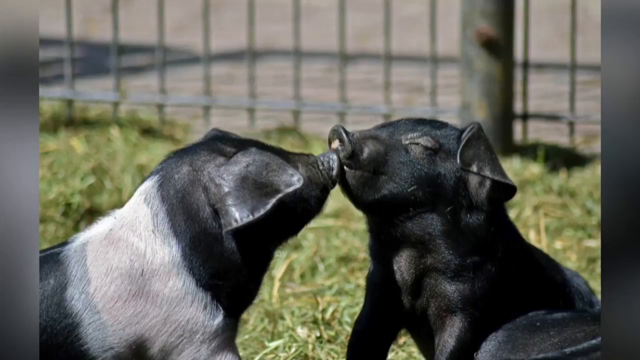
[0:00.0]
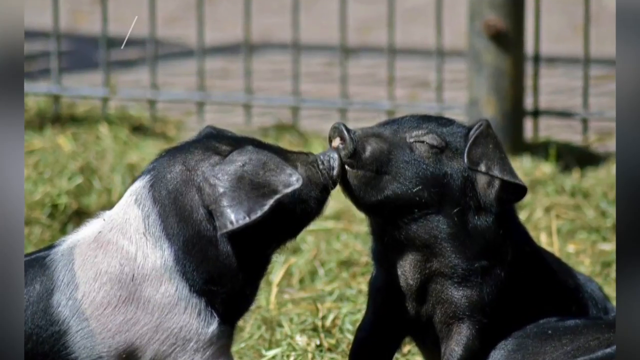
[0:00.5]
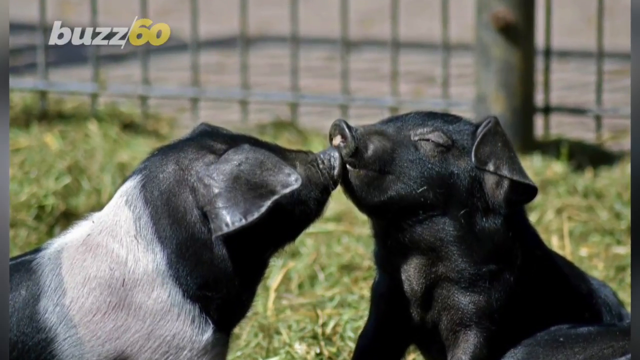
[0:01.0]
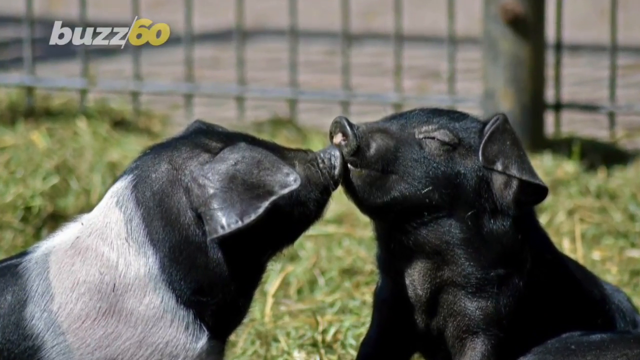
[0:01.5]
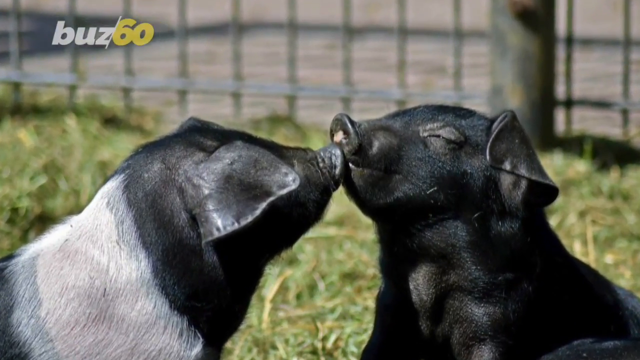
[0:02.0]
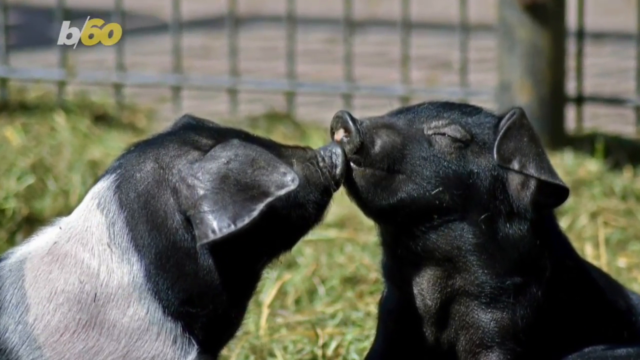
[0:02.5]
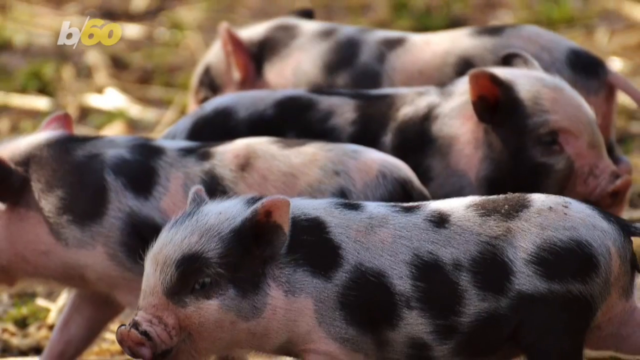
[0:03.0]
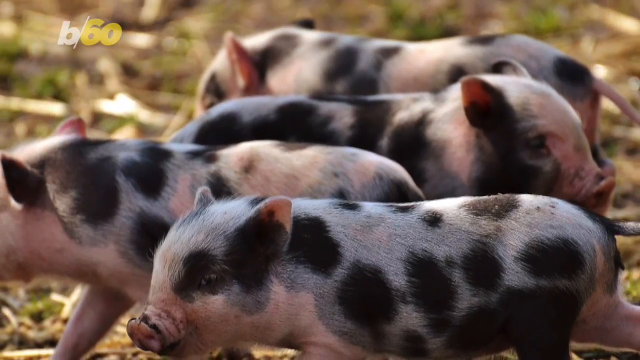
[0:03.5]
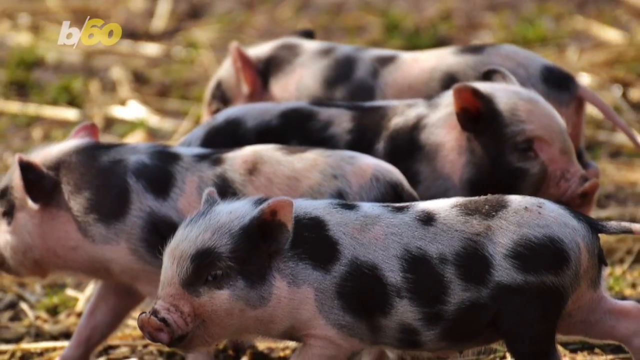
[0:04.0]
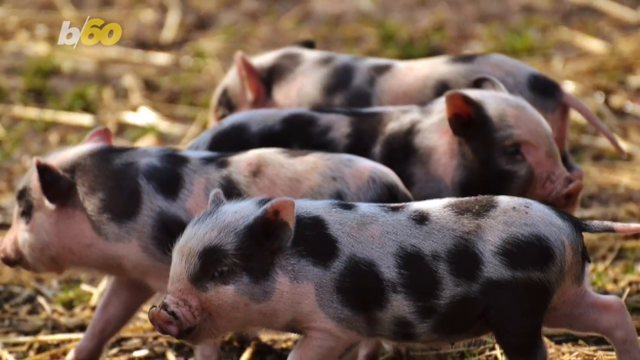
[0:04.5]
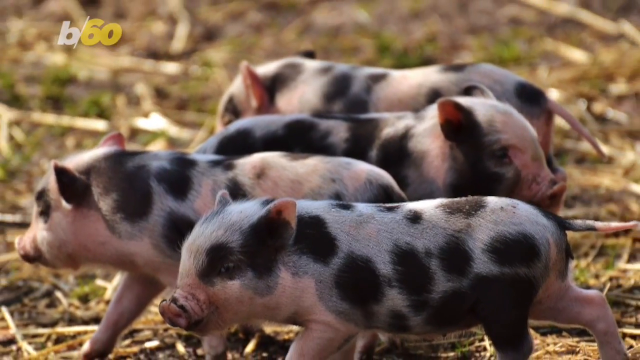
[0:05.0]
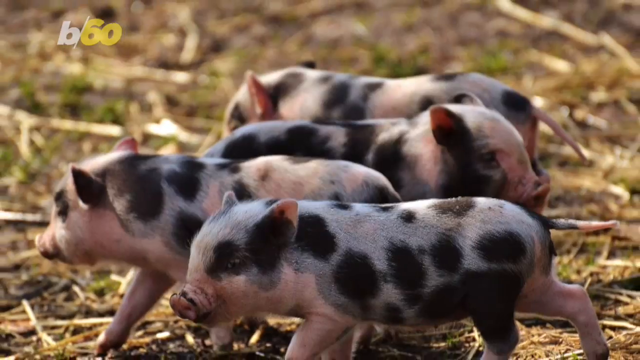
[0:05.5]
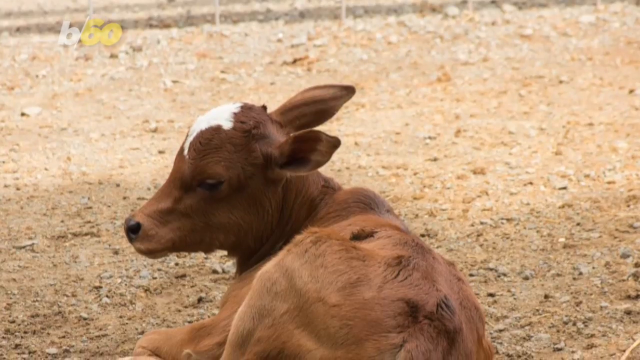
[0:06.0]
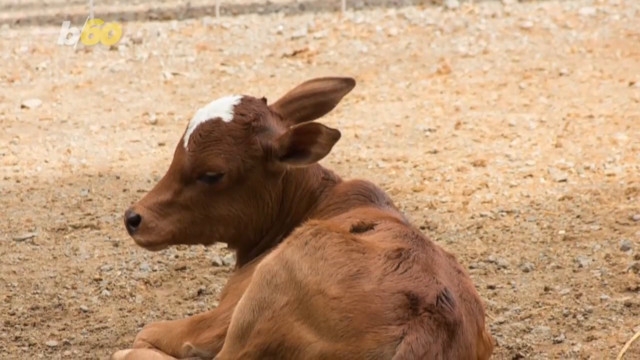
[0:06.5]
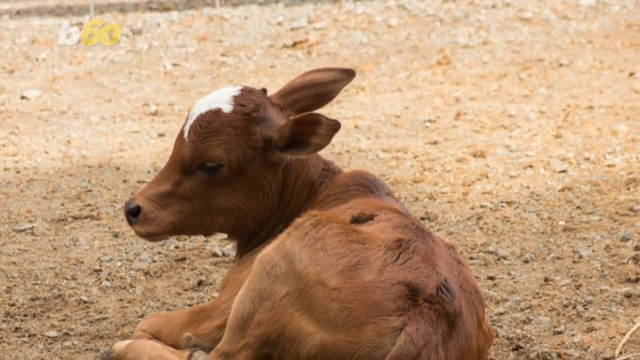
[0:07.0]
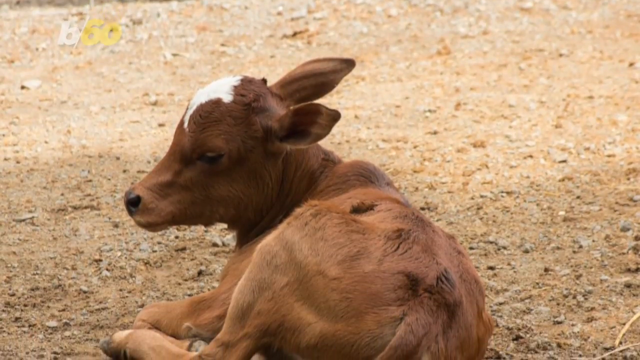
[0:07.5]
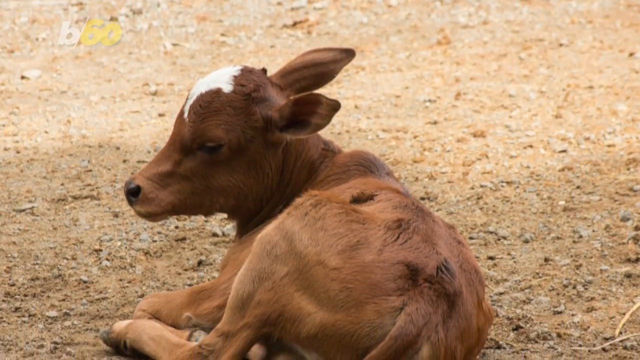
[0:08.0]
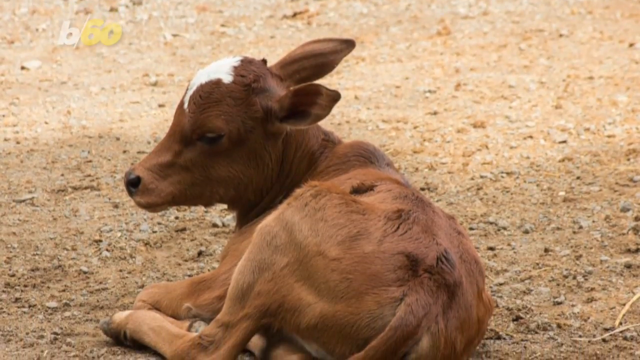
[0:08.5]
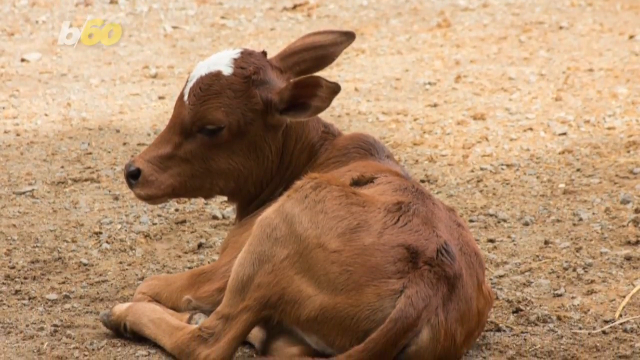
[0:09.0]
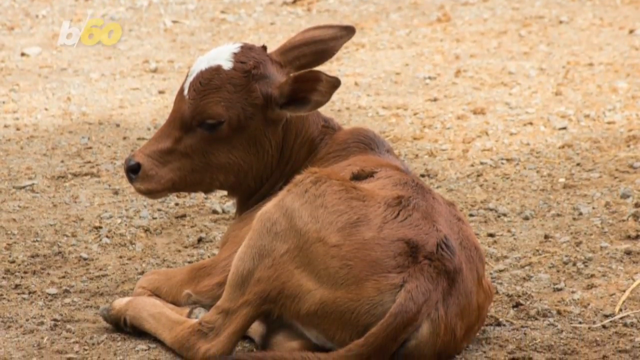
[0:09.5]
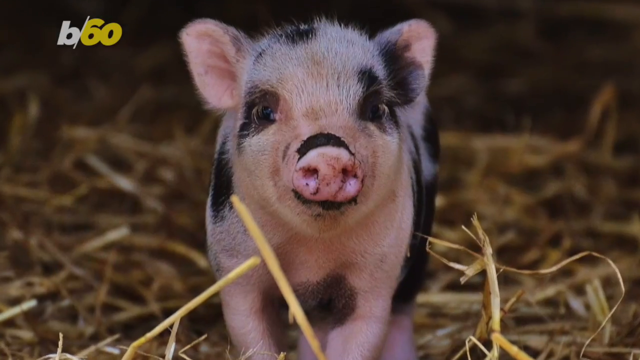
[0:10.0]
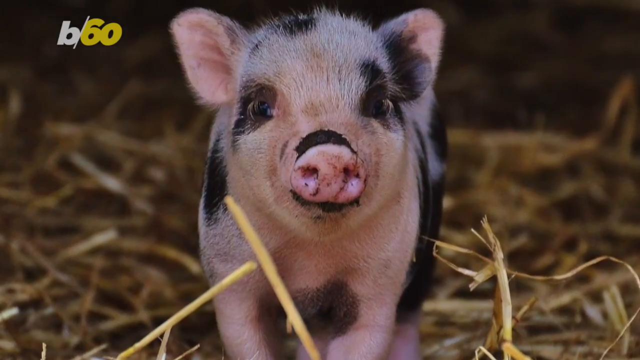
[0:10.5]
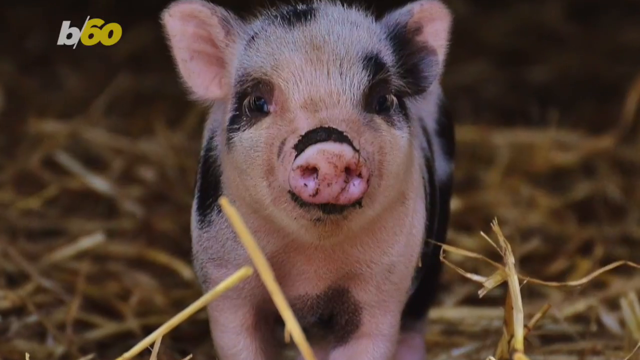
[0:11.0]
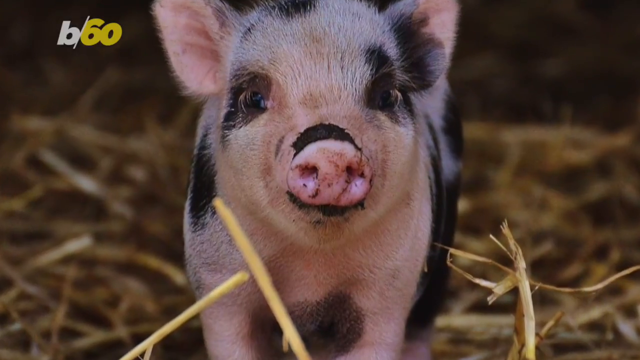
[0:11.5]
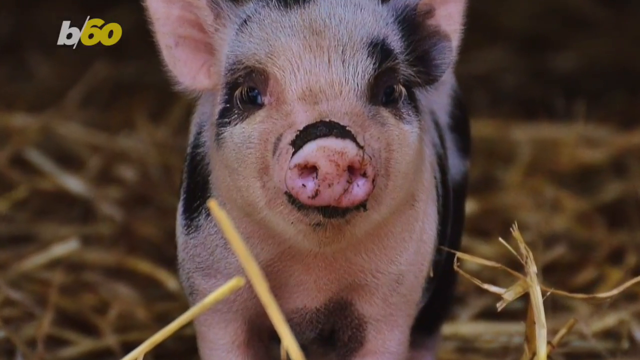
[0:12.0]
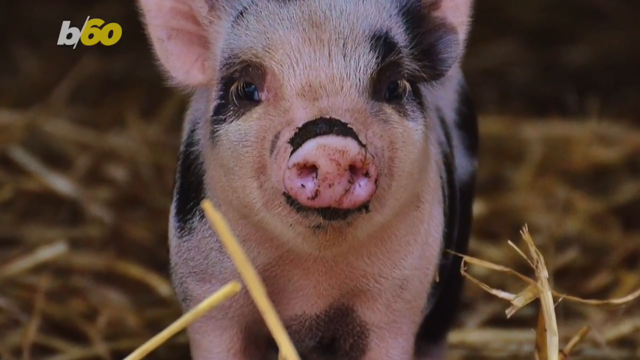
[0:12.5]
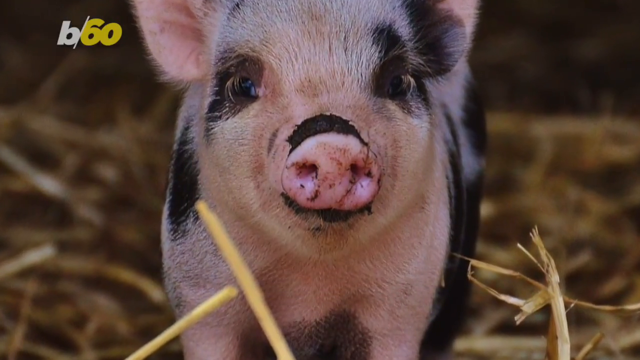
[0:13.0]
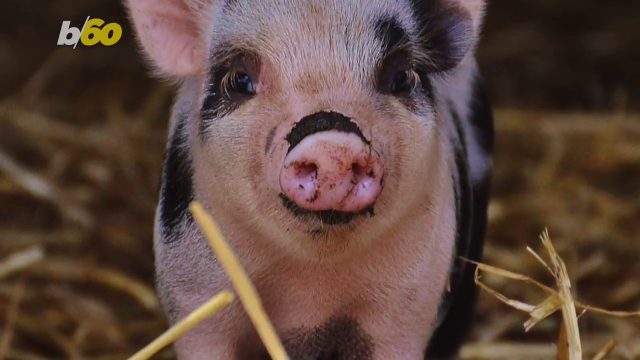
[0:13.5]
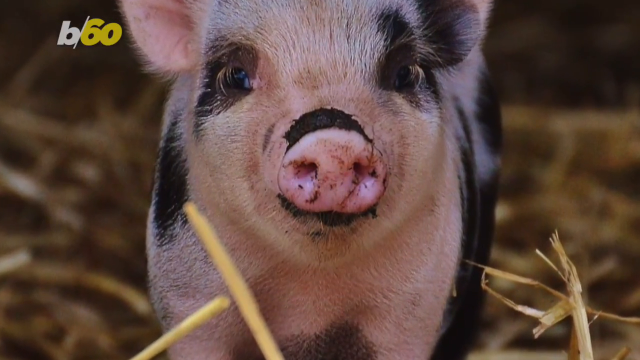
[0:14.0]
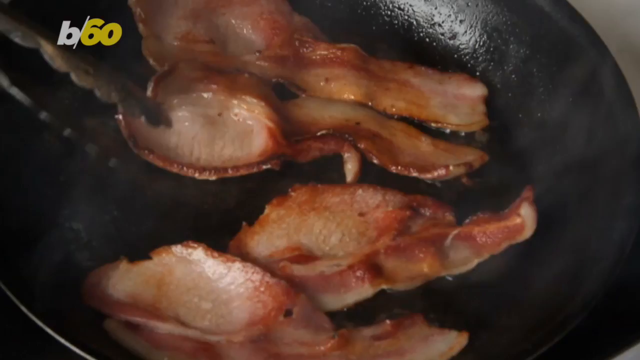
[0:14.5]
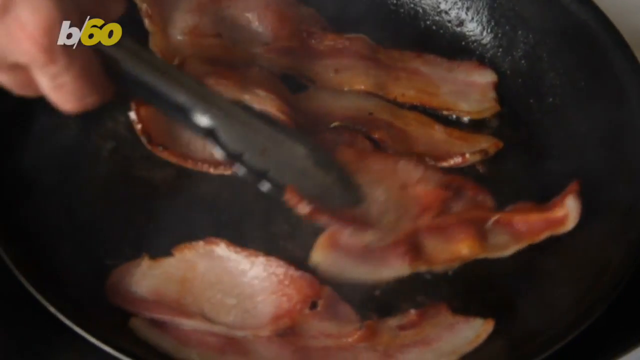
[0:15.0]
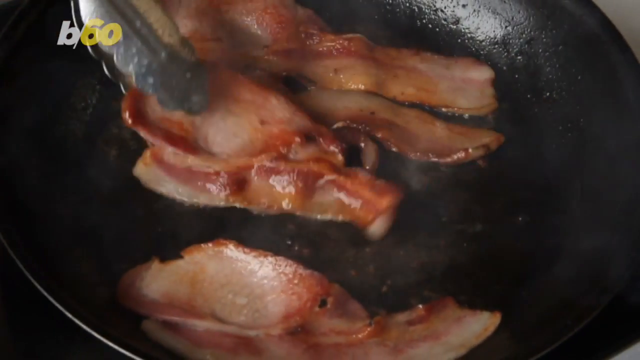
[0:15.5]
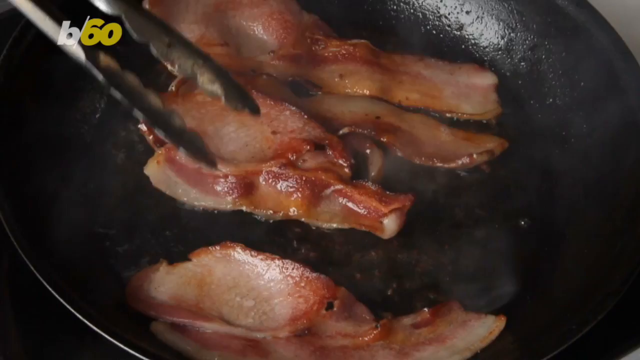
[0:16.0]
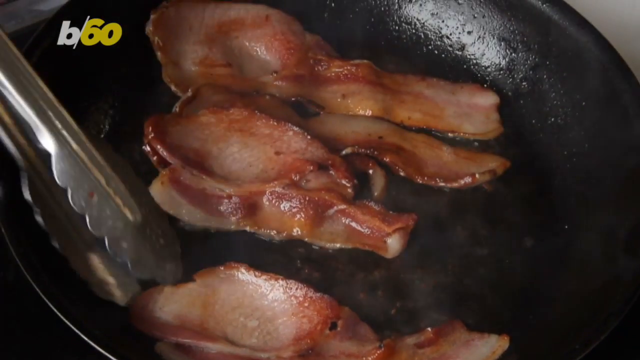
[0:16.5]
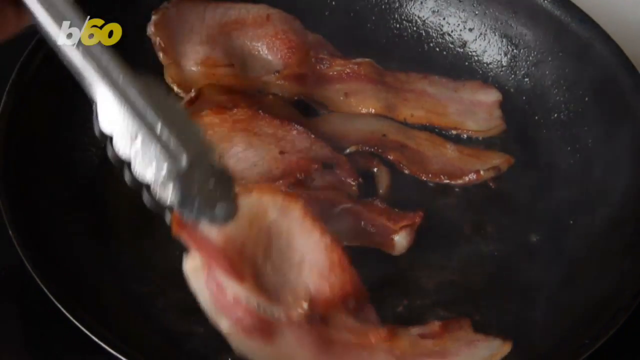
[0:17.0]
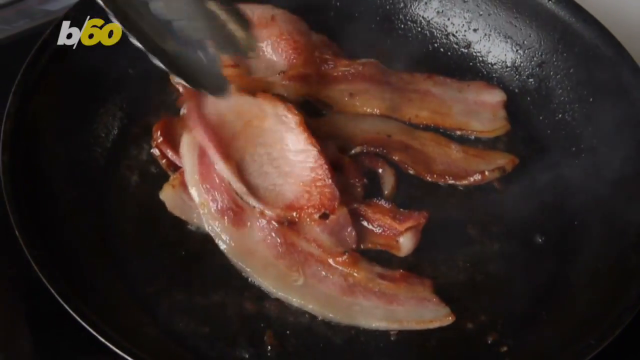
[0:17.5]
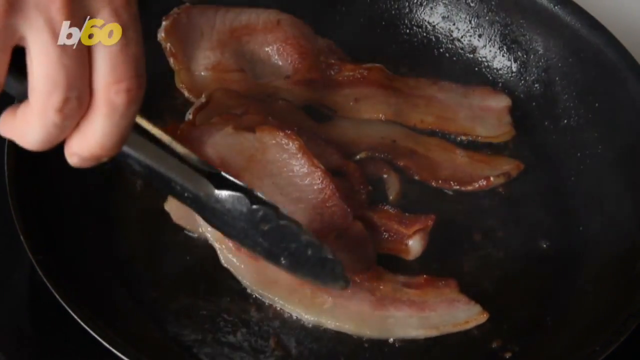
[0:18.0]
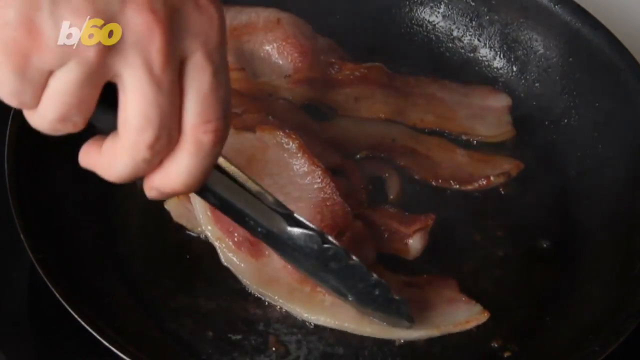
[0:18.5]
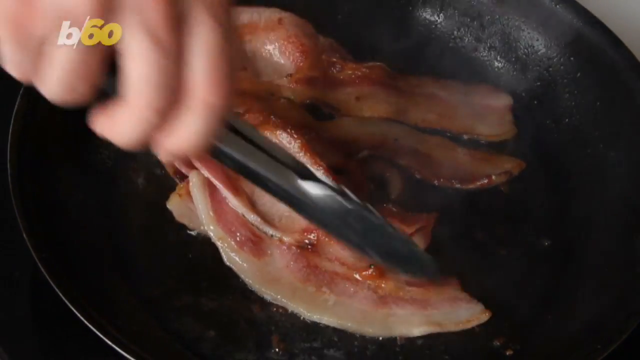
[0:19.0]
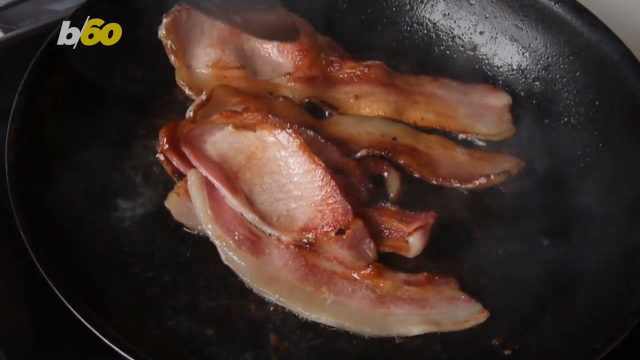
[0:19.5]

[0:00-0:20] Two pigs appear on screen: the one on the left is black with some white stripes, and the other is all black. The pigs seem to be kissing. Behind them are green grass and a fence. The scene changes to four pigs facing opposite directions, two facing left and two facing right. The pigs all look the same, with white and black dots on them. Next, a brown cow with a white mark on its face is lying down.